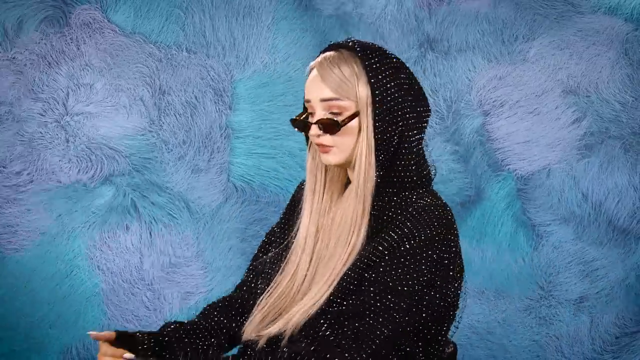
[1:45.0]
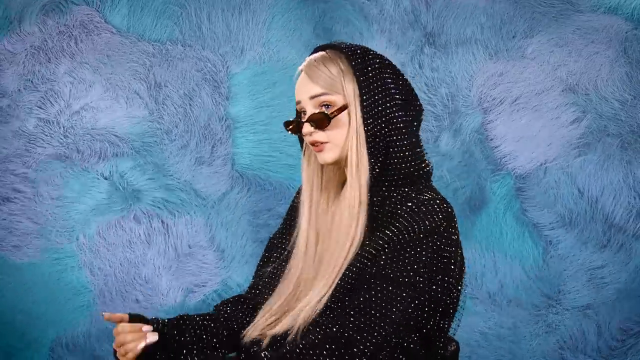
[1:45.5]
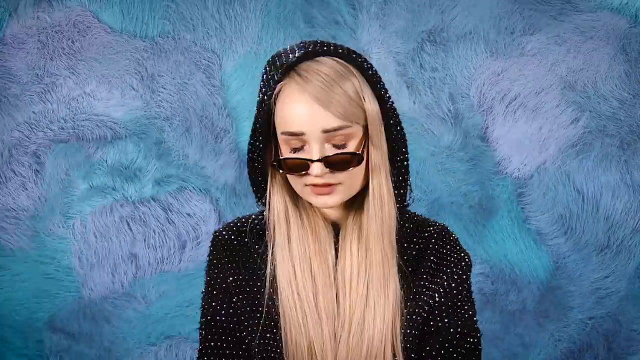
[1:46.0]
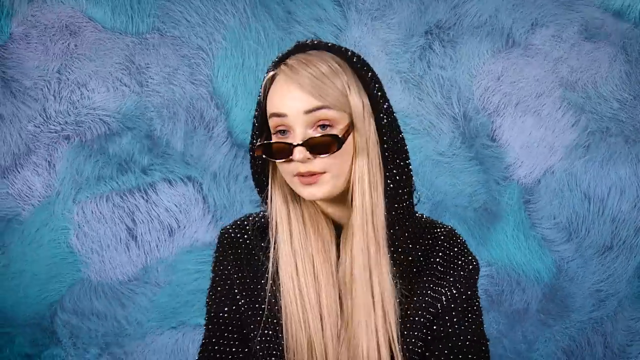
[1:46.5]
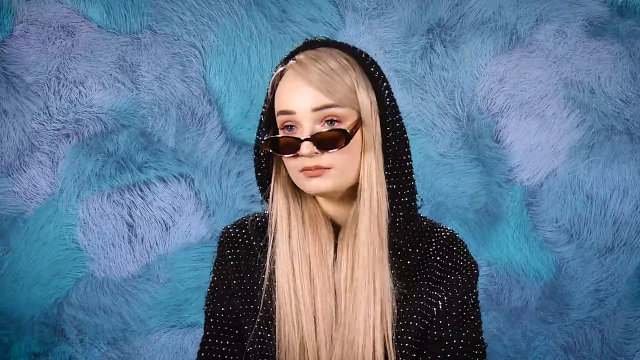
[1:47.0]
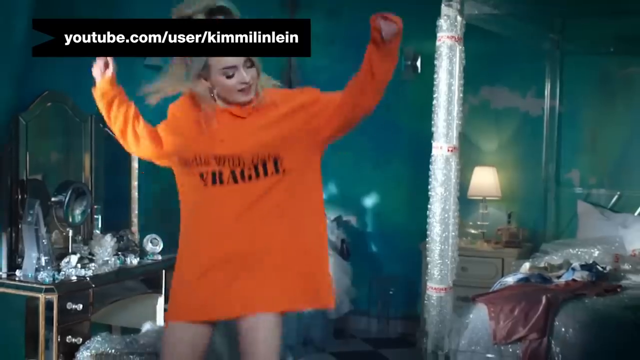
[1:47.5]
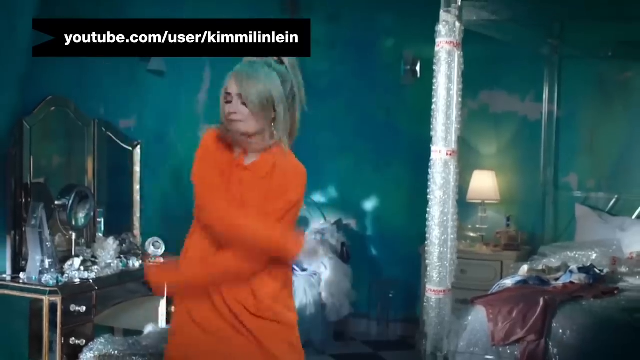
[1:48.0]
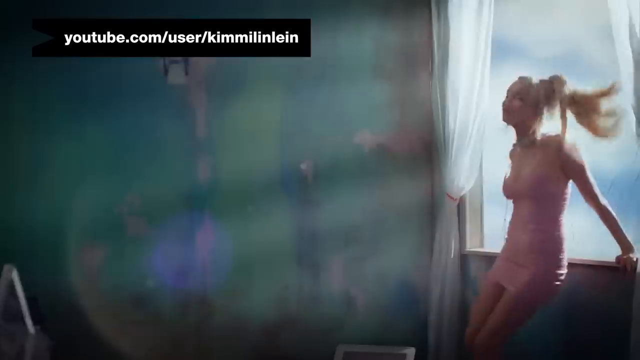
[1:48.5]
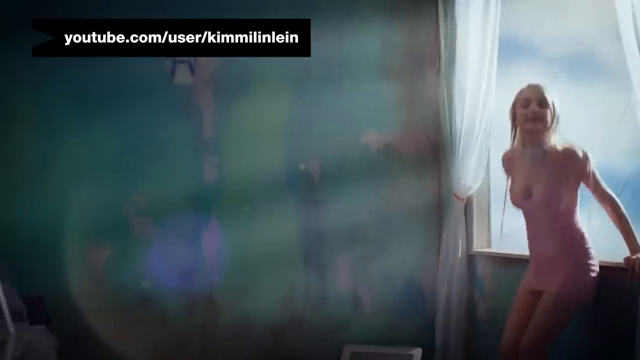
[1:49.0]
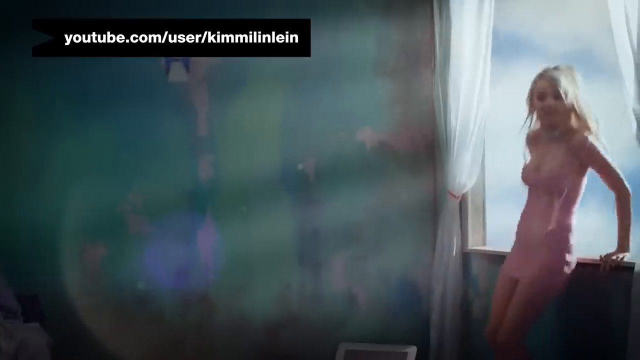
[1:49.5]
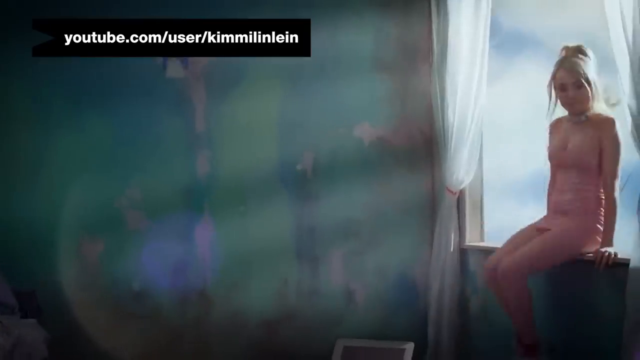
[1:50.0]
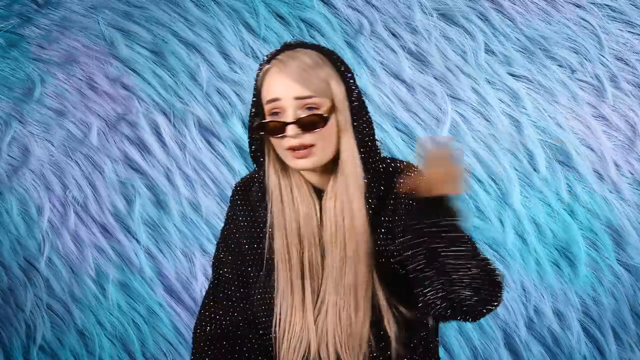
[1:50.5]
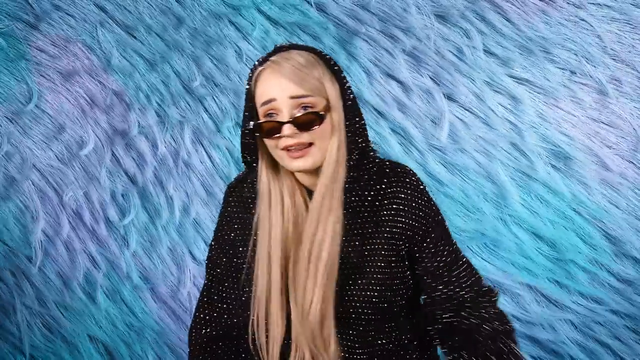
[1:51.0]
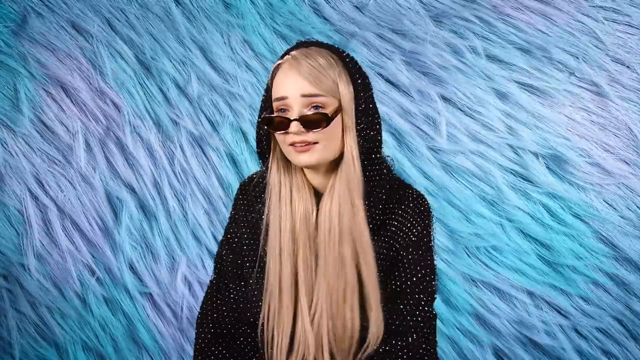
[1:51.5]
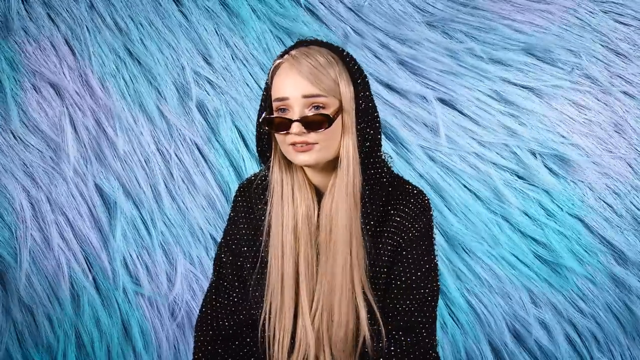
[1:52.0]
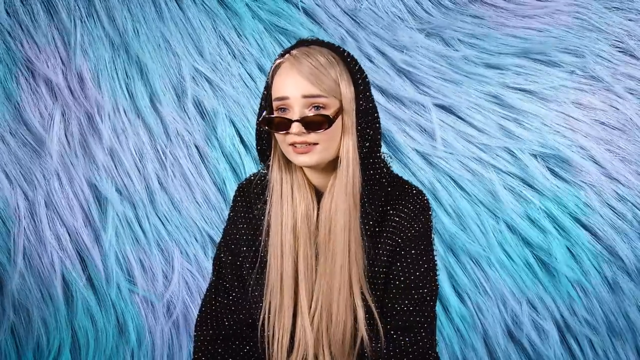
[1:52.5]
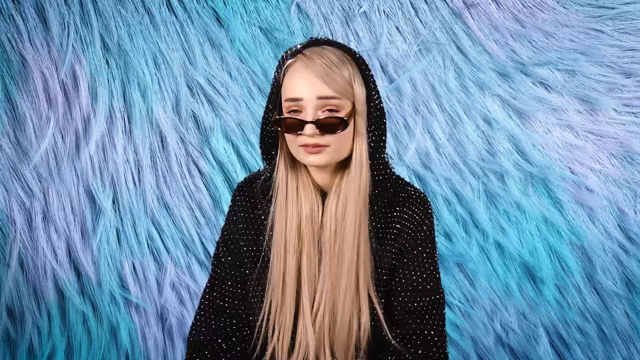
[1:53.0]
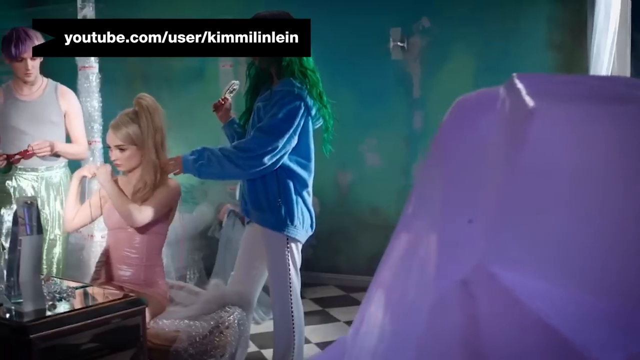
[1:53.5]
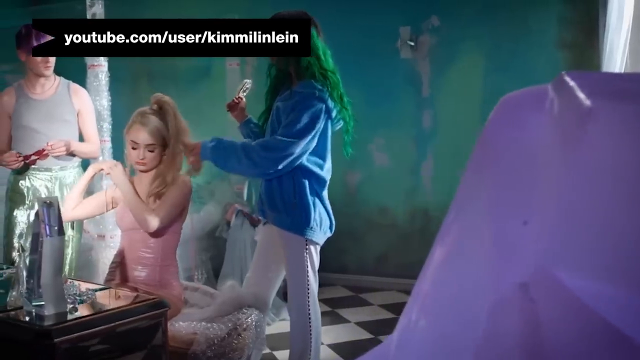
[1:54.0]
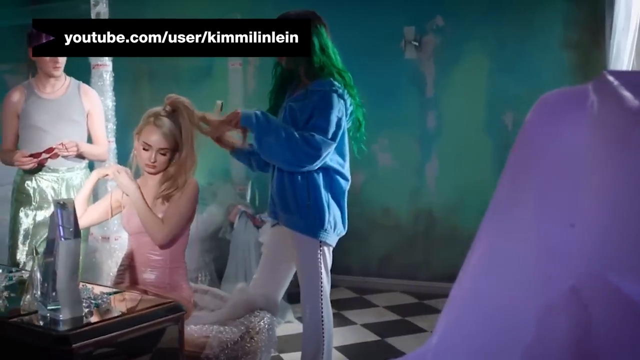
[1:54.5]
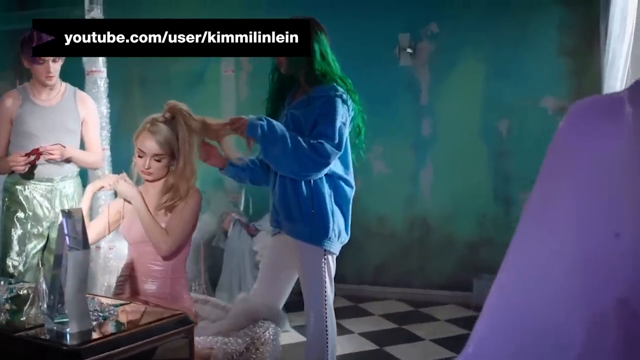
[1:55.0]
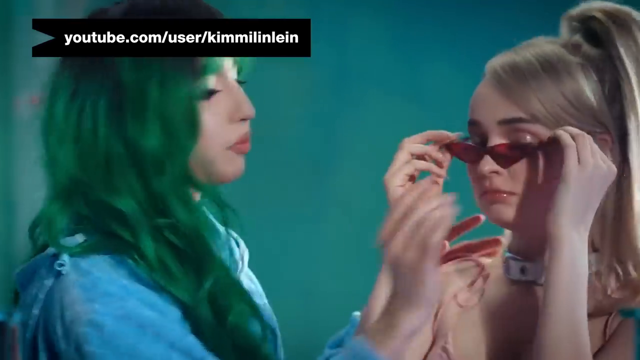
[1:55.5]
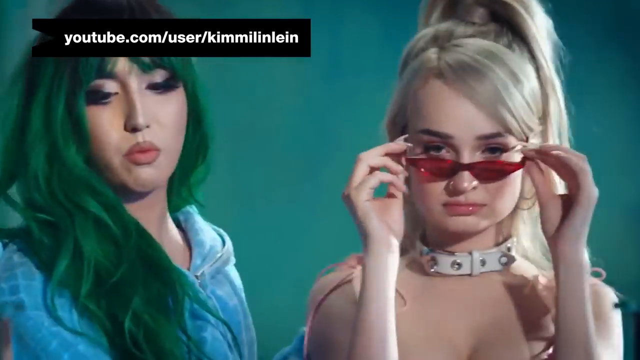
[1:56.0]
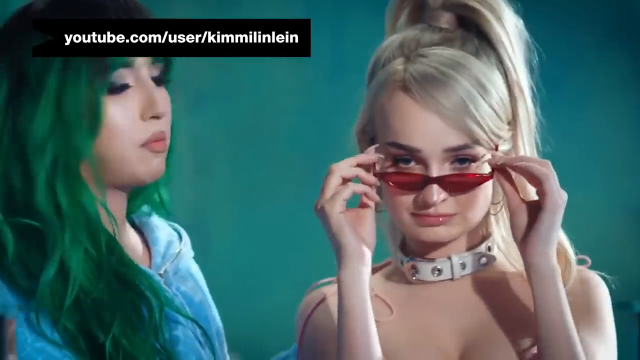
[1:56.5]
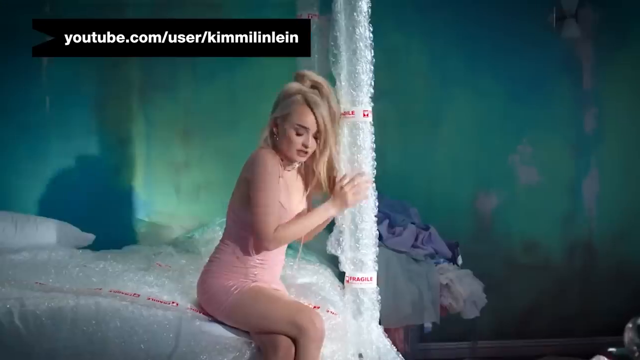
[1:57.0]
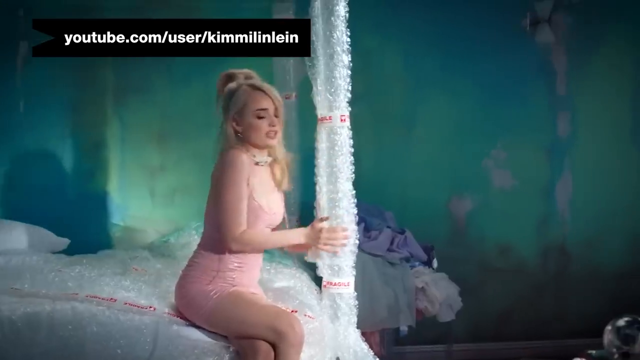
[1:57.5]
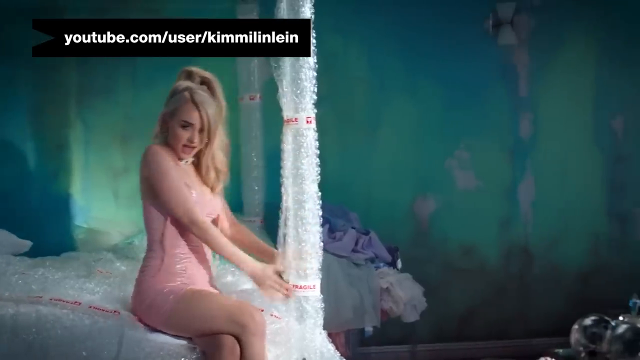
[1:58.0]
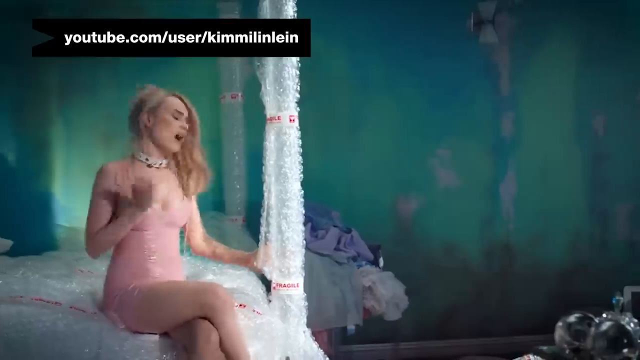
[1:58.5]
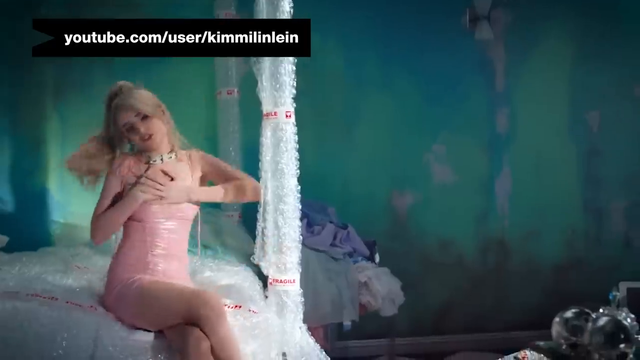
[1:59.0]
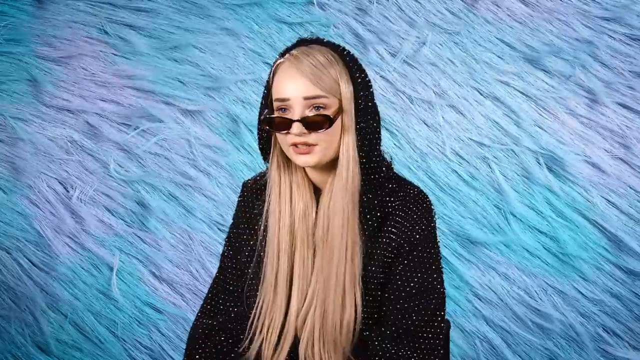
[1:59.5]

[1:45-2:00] A person with fair skin and long blonde hair, wearing brown sunglasses and a black sequined hoodie with the hood pulled up, appears first. The video quickly changes to the same person in an oversized, long-sleeved bright orange shirt, hair in a high ponytail, dancing around in a bedroom with green walls. It cuts back to the person talking, then to another clip in what looks like the same or a similar green-walled setting, where the person wears a very short, sleeveless, slim-fit light pink dress, jumps up onto a windowsill and looks at the camera. In another clip in the same setting and pink dress, at least two other people look like they are styling the person, who sits in a chair; a person with green hair hands her a pair of red sunglasses, and she looks into the camera.